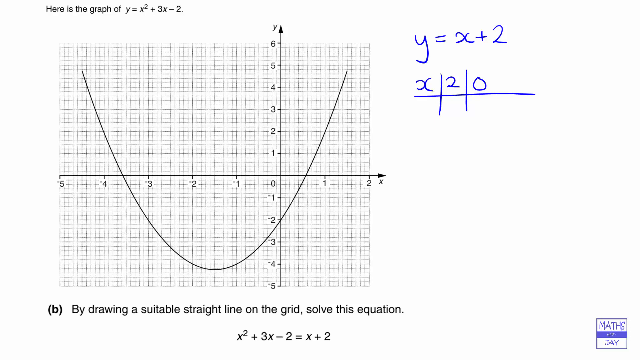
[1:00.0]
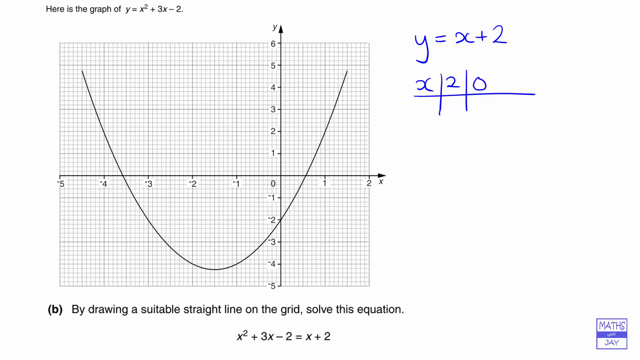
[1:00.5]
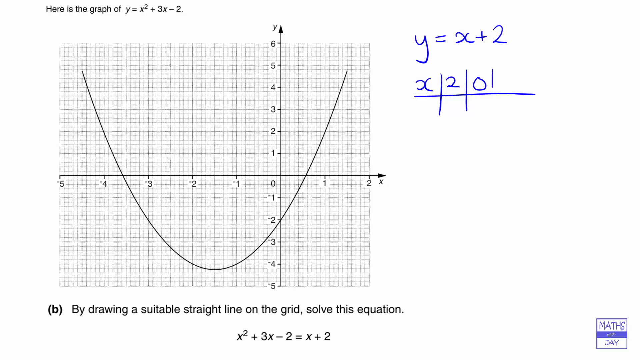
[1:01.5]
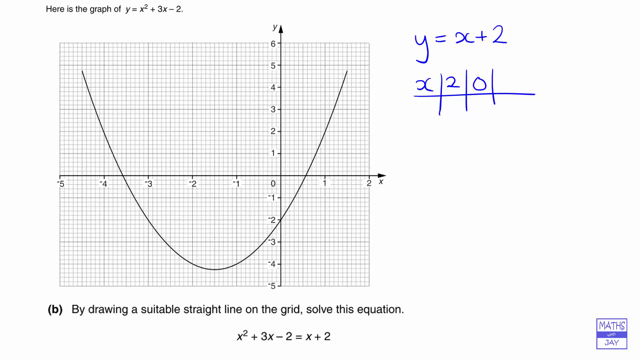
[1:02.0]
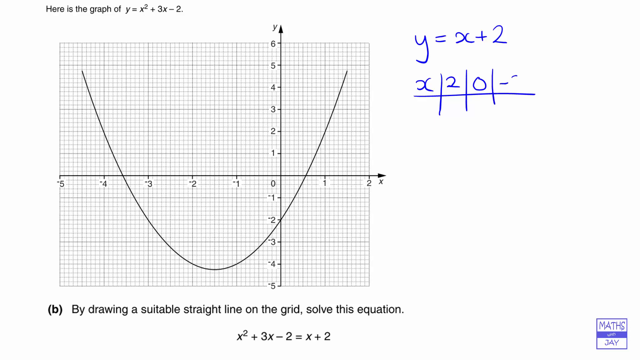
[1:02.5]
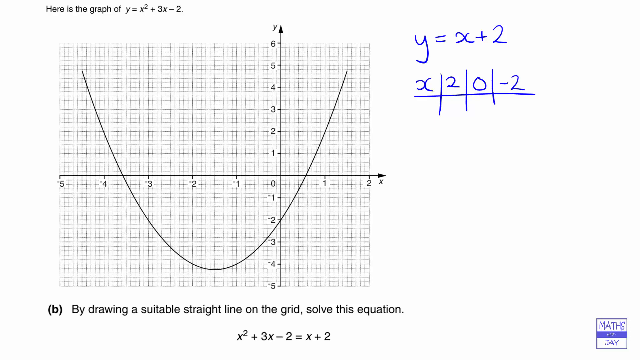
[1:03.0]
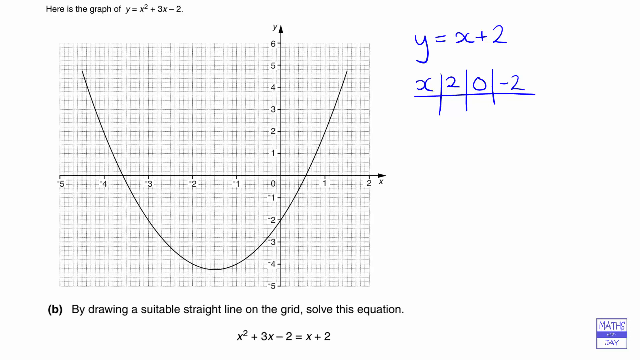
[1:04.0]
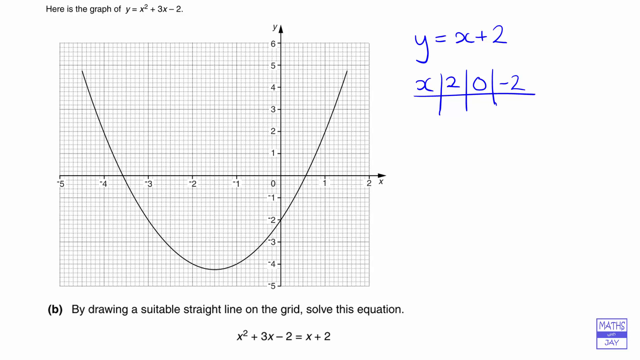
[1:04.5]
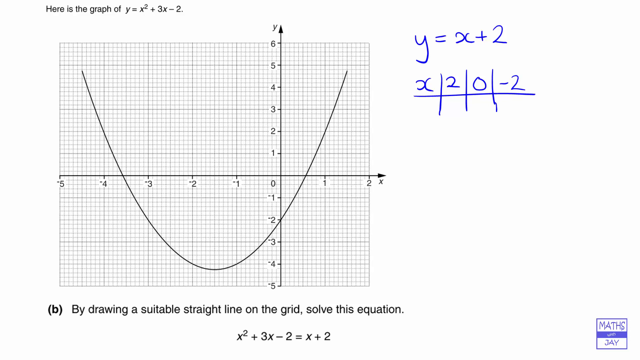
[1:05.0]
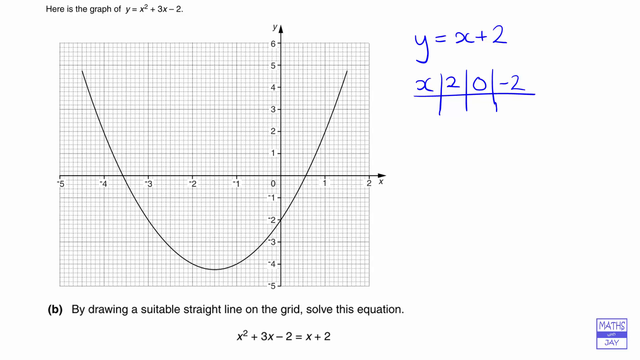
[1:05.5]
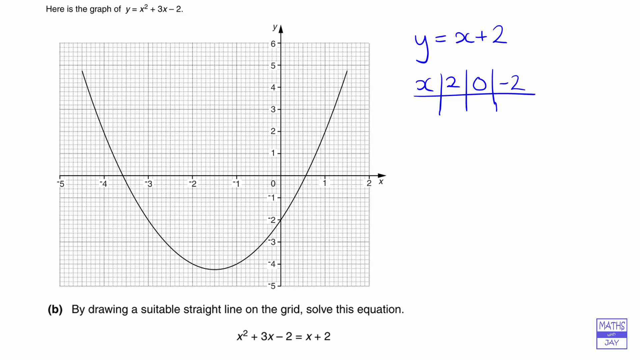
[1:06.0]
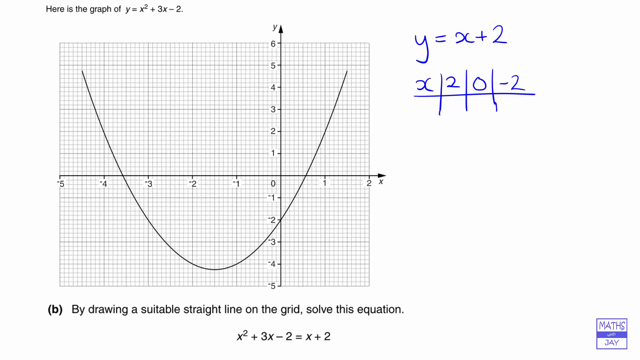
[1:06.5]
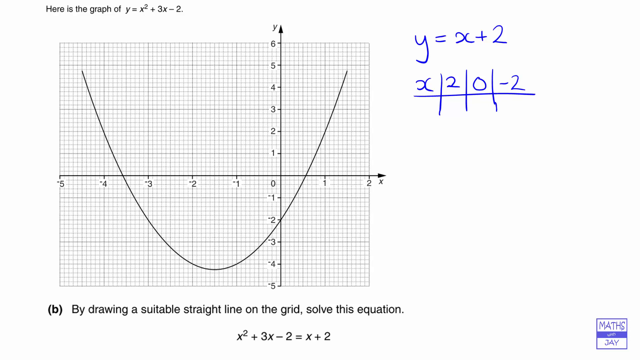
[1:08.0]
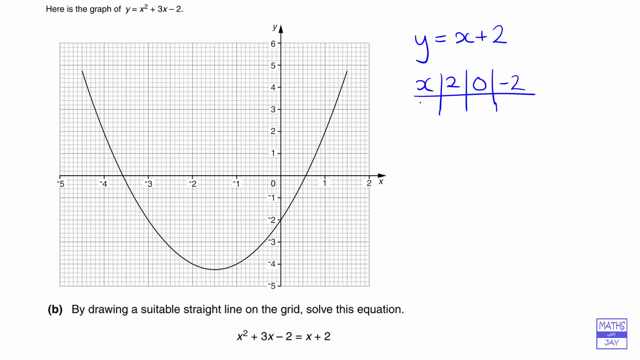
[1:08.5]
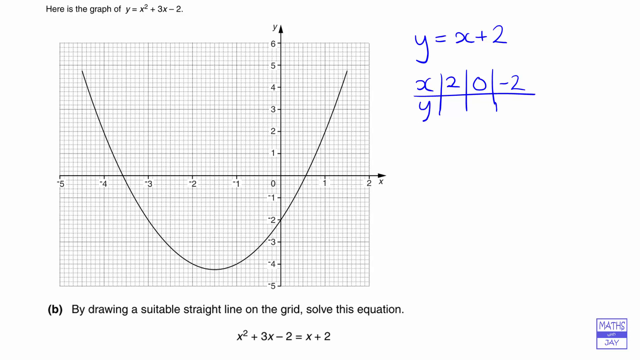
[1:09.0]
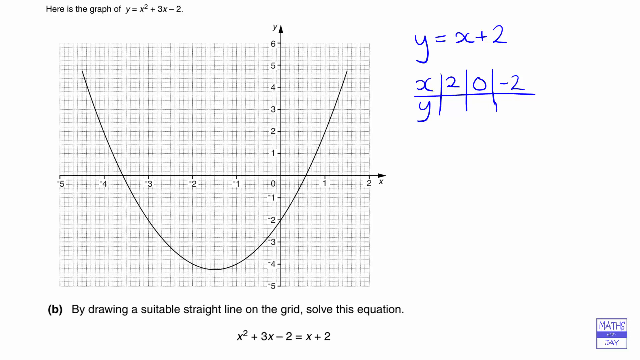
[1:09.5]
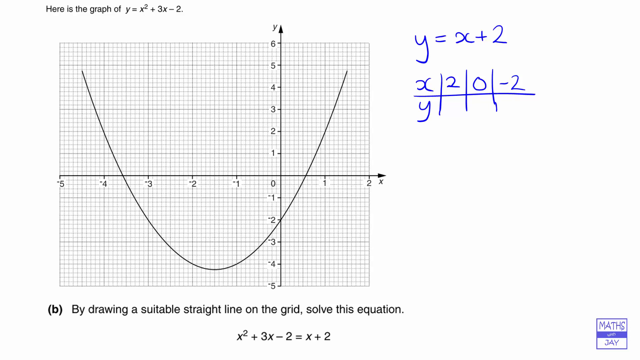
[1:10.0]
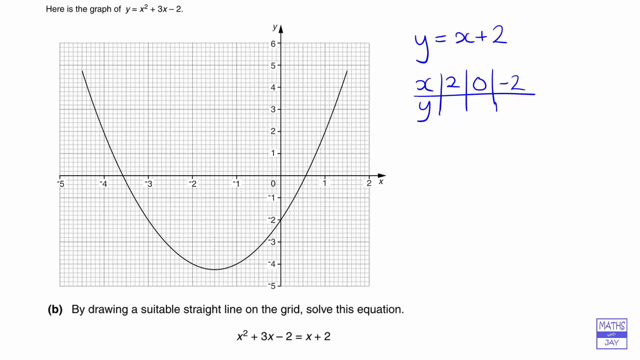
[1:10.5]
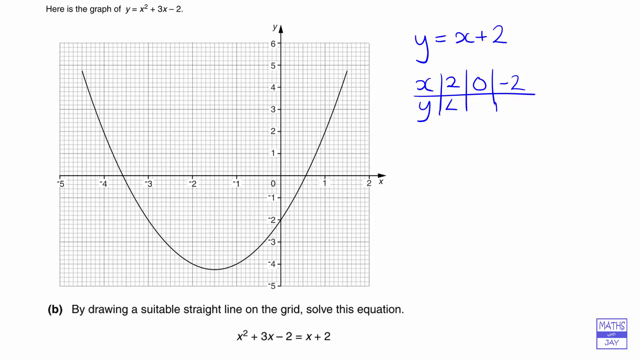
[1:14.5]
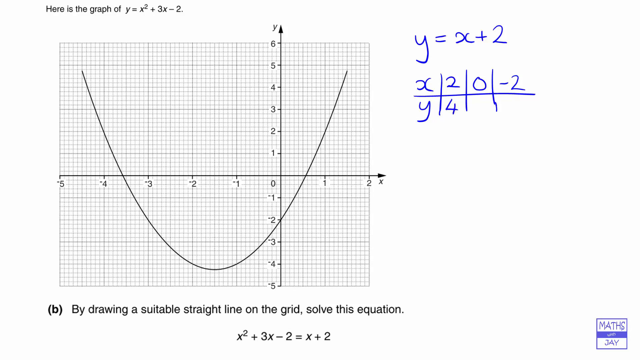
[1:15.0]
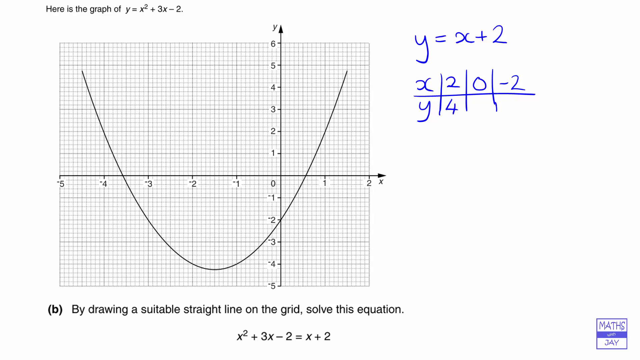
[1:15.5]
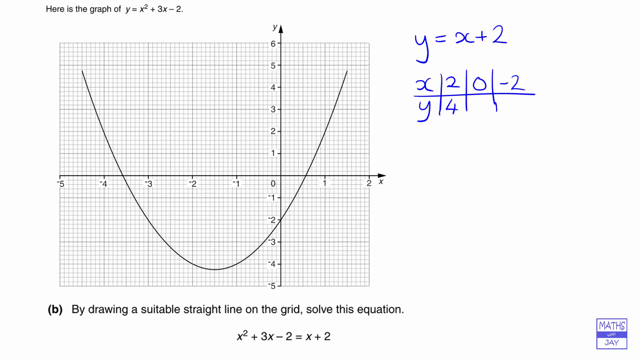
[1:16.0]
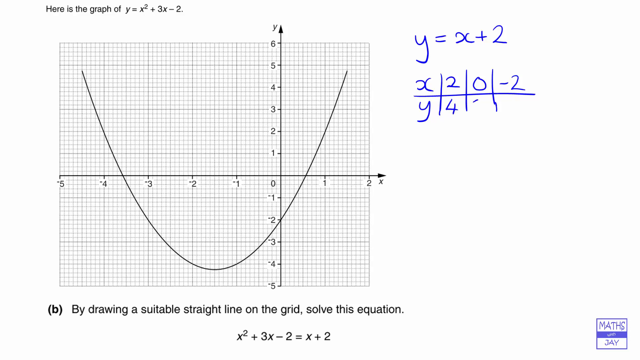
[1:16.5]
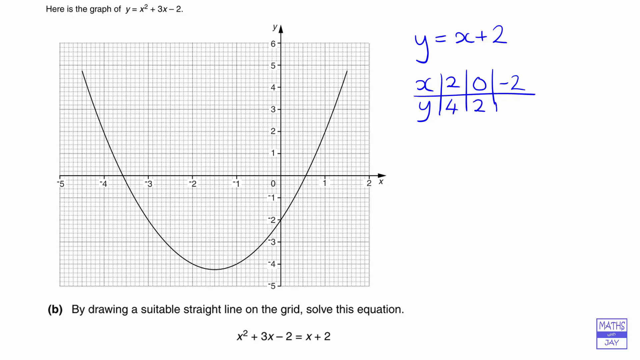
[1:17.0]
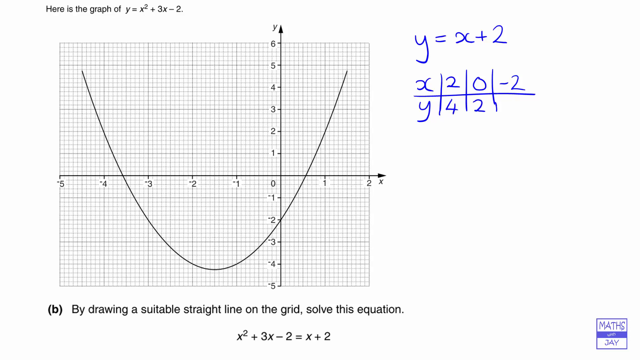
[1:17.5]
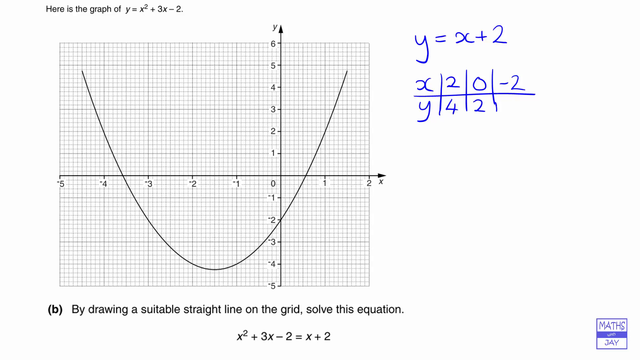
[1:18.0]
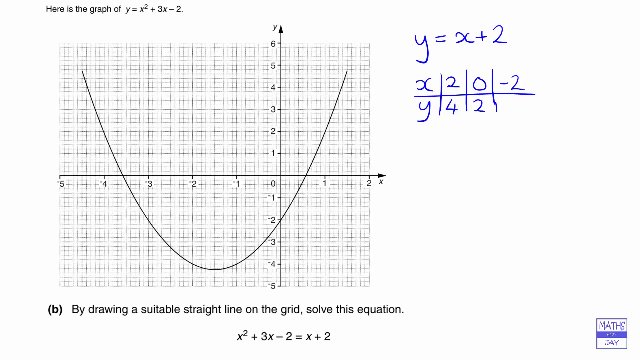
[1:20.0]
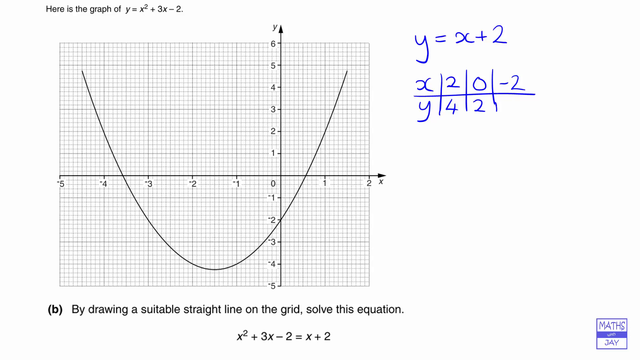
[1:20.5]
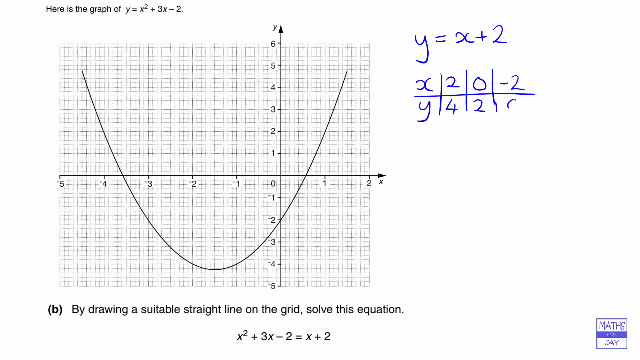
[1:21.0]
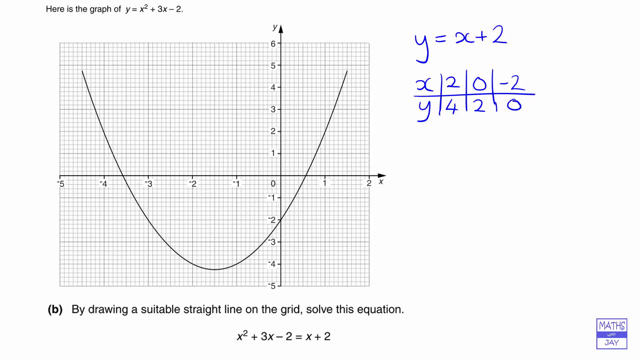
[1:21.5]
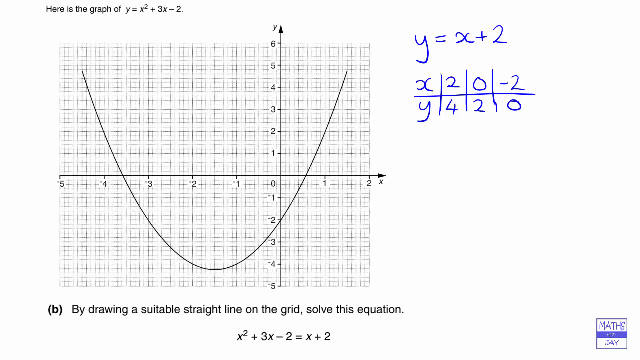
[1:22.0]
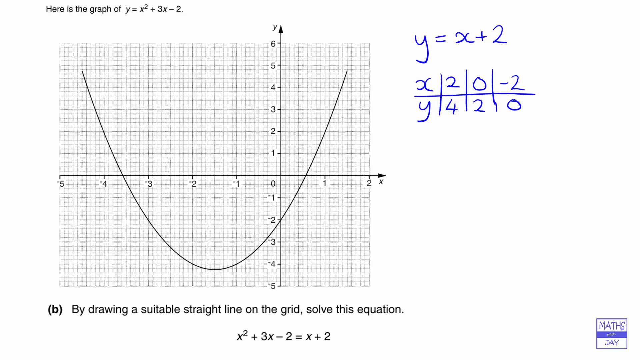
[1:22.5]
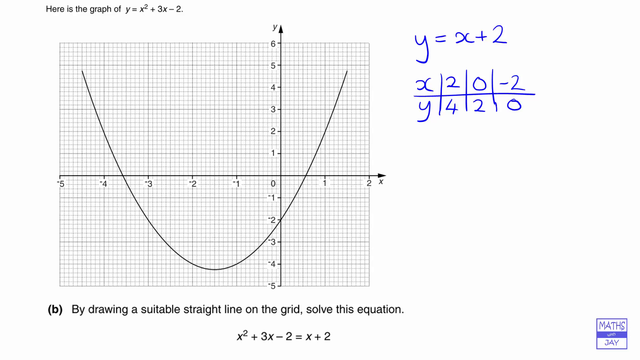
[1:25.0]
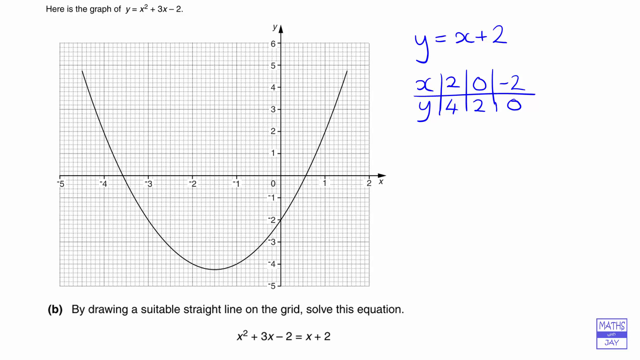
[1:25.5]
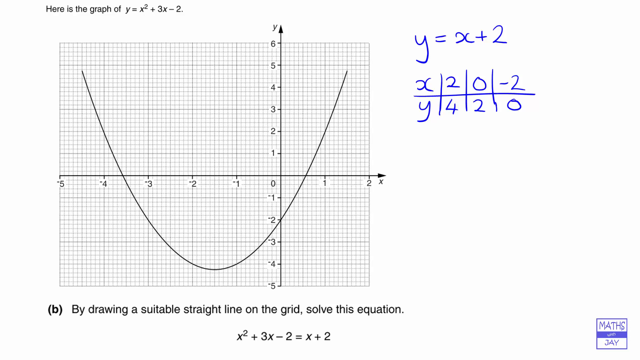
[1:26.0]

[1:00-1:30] A handwritten equation, y = x + 2, is in the top right corner of the graph. Below it, a table is drawn with an x row reading 2, 0, −2, and beneath it a y row giving 4, 2 and 0 for those values.